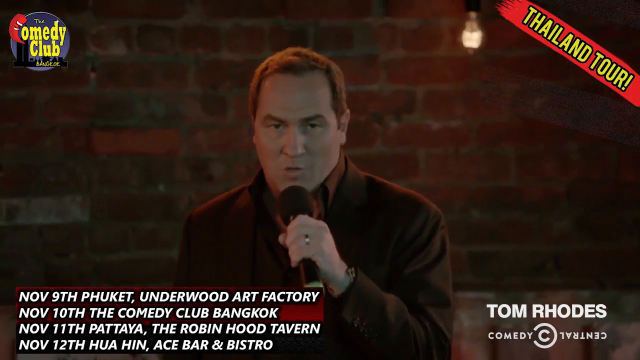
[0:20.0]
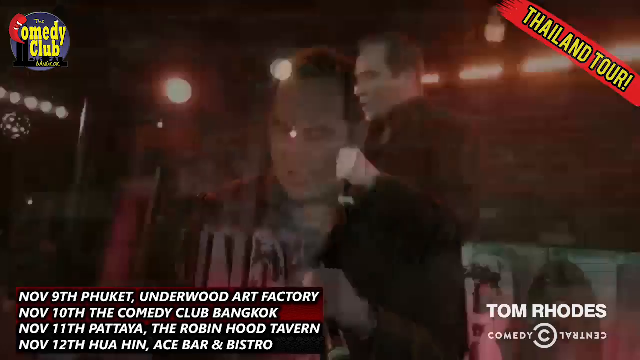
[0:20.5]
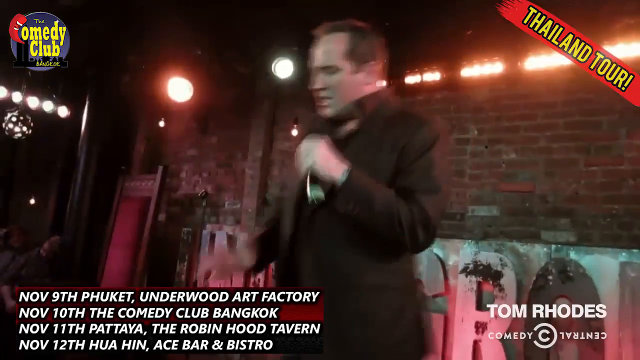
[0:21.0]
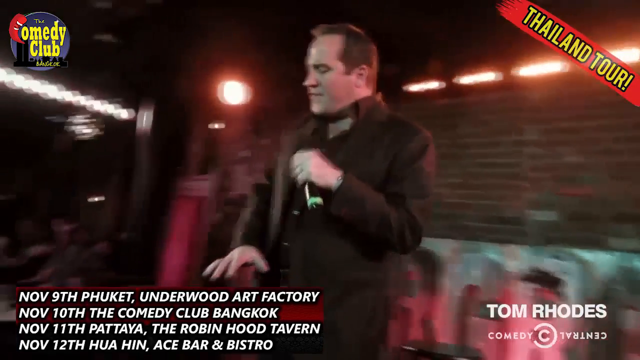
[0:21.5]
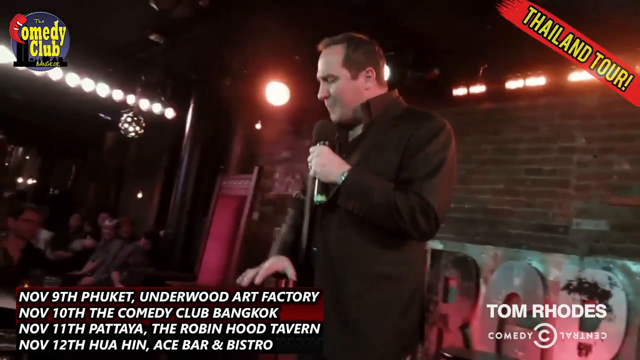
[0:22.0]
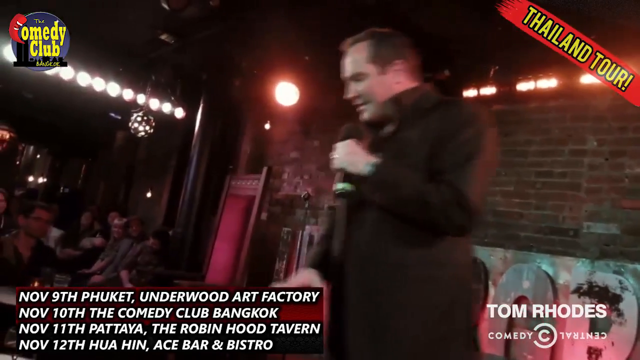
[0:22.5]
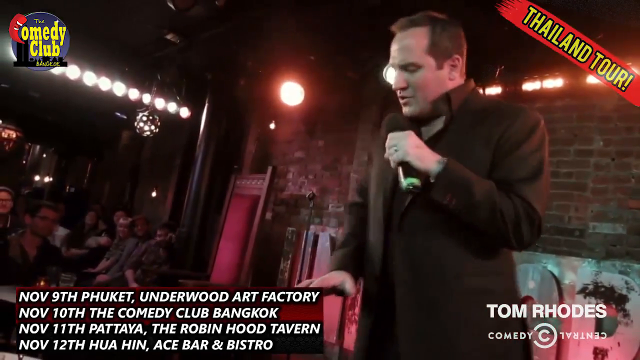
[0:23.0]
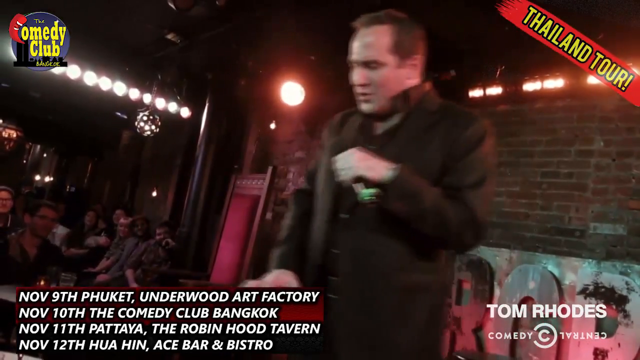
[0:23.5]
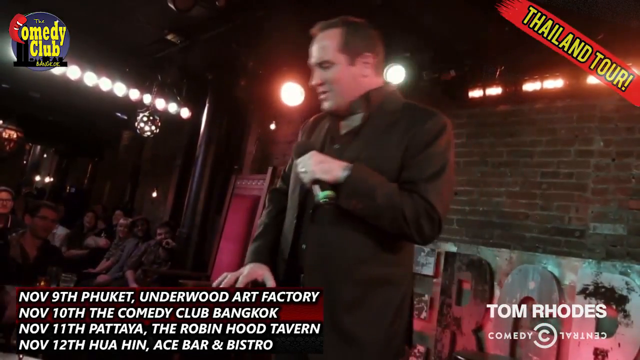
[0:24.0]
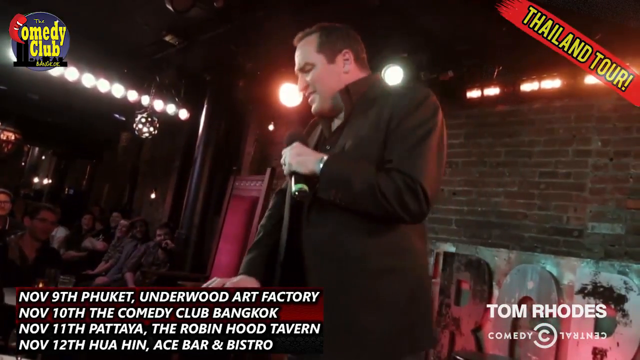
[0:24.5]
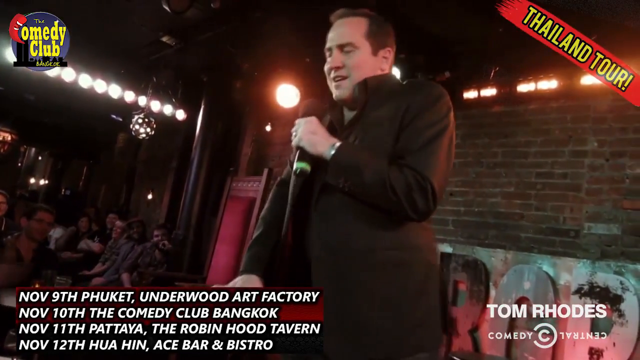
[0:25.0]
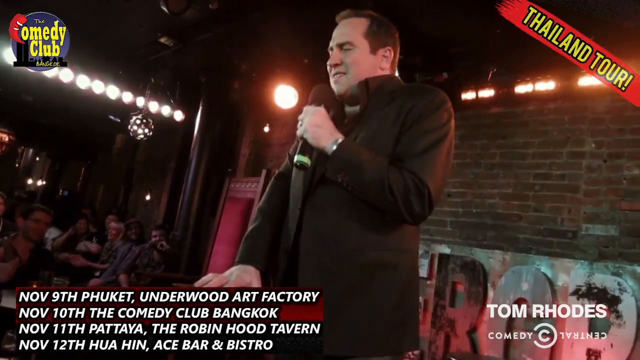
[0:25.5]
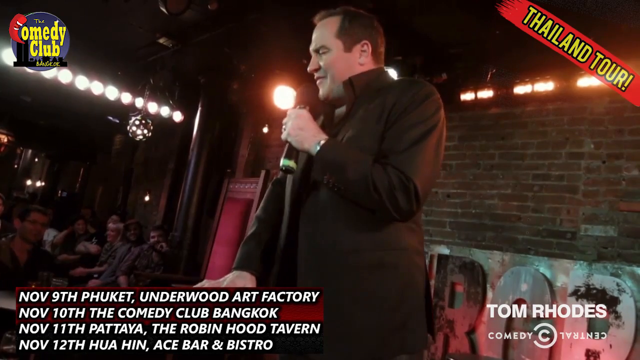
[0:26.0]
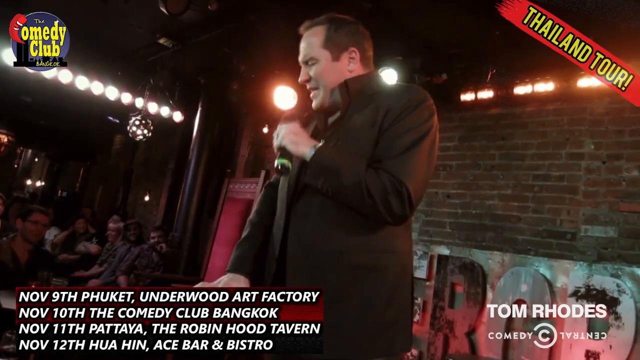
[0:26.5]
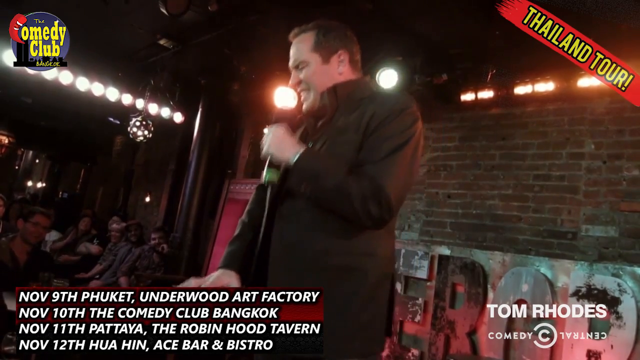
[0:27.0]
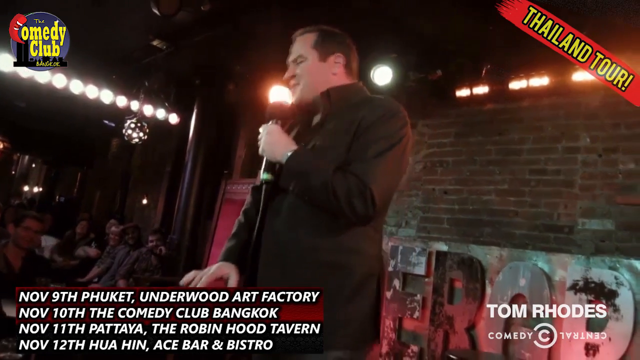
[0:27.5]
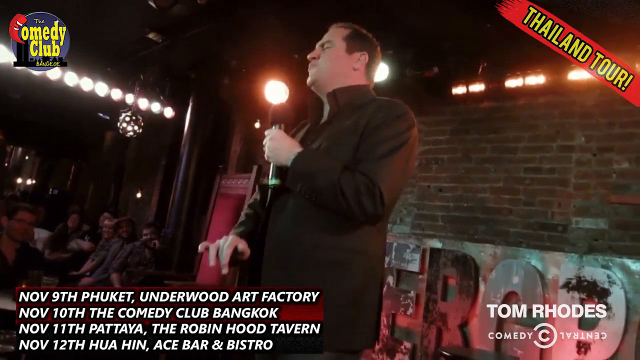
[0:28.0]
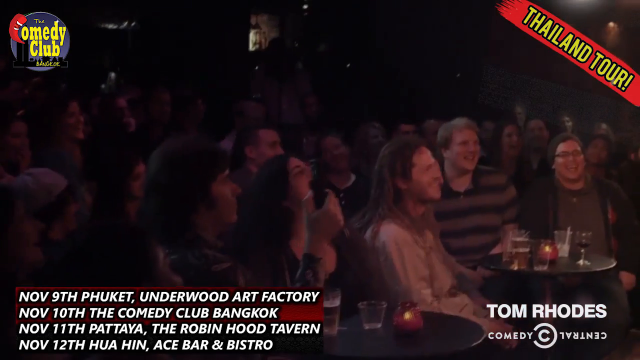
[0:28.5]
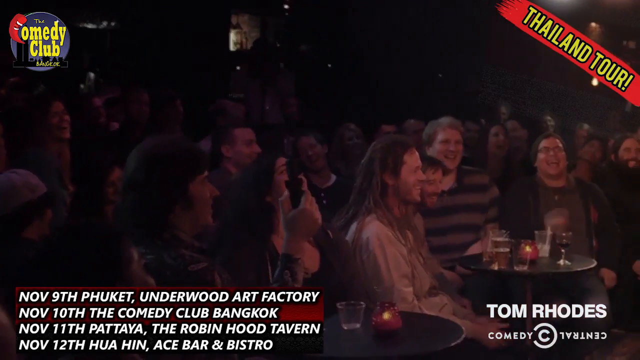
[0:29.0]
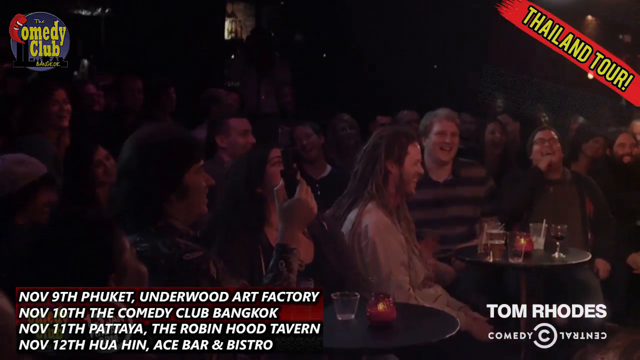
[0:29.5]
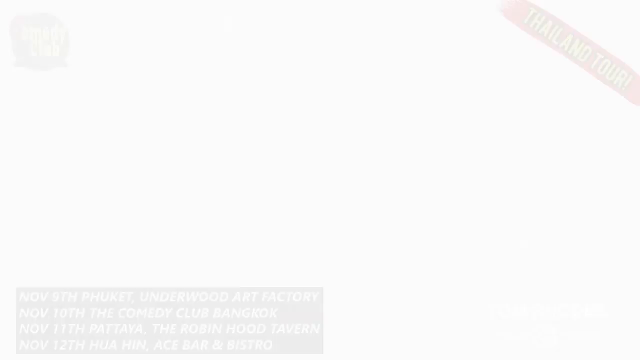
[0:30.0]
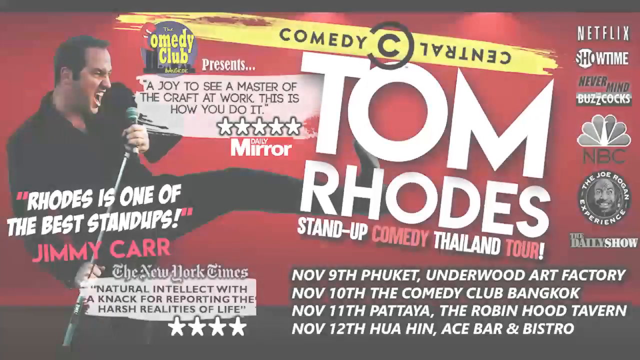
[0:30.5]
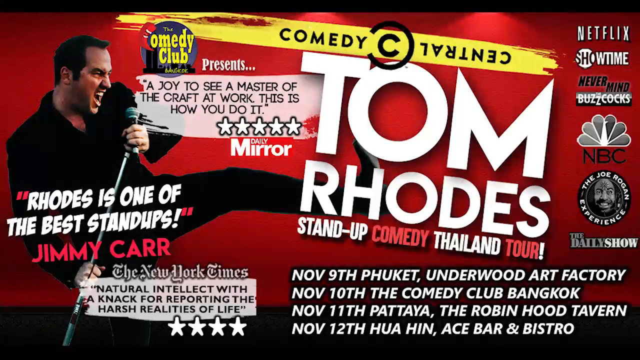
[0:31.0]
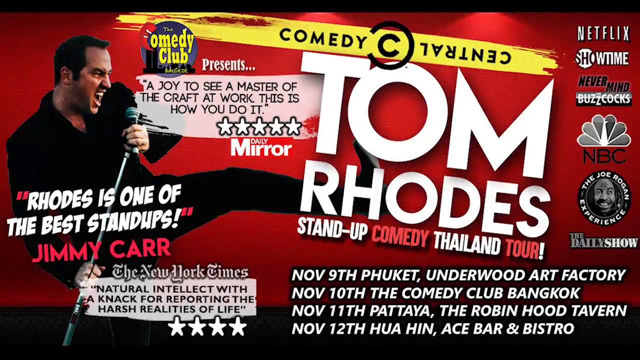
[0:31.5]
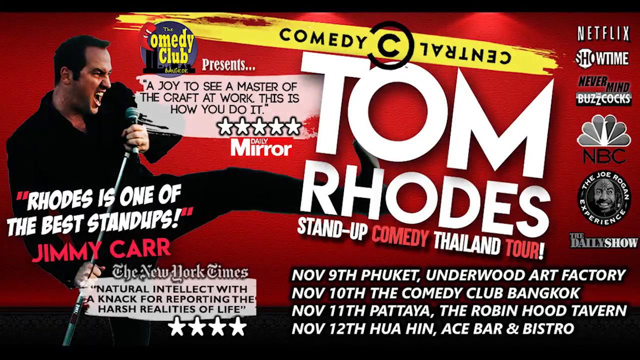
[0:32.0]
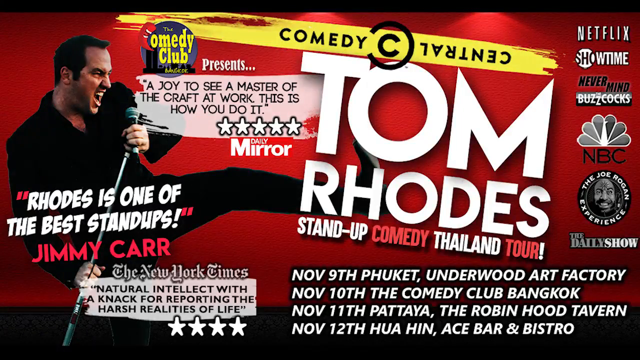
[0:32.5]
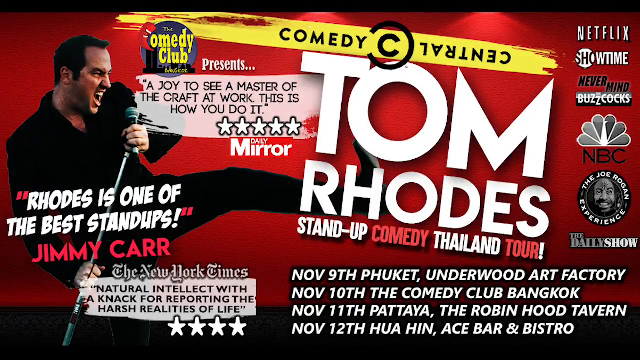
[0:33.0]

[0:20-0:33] The comedian is on stage holding a mic and wearing a black jacket. Many people are sitting down and laughing, and he appears to be cracking jokes and telling stories. It is night. The room has lights and some decorations, and the people sitting at their tables have drinks. Behind the man, where he is standing, there is a brick wall.